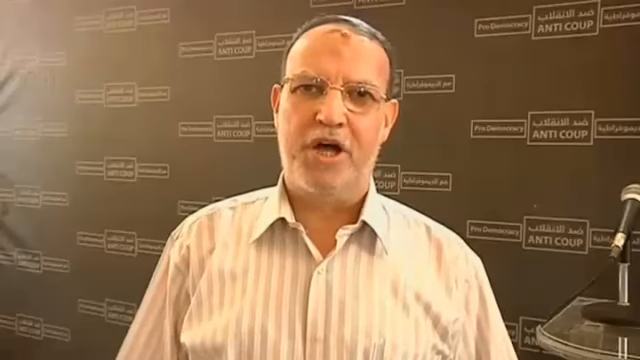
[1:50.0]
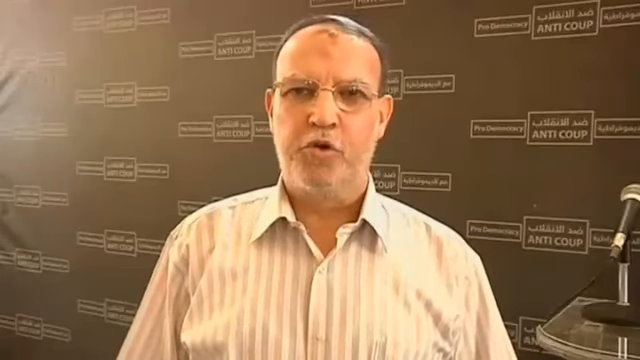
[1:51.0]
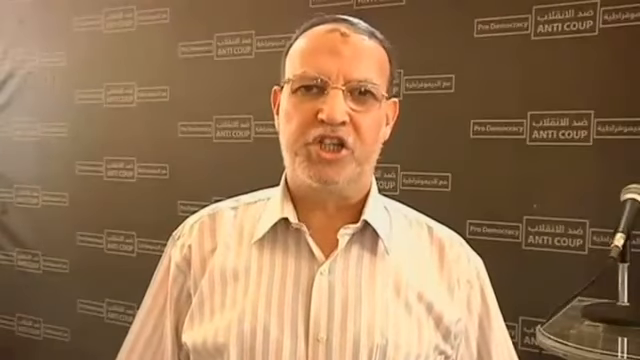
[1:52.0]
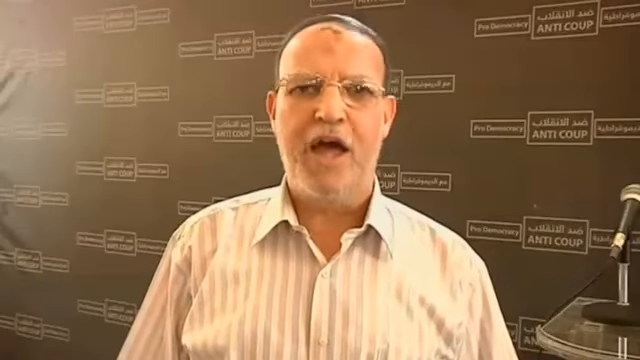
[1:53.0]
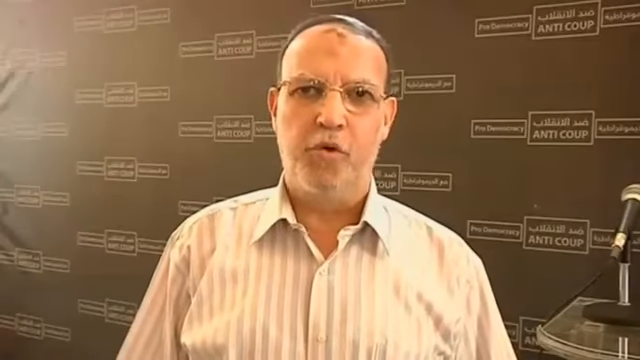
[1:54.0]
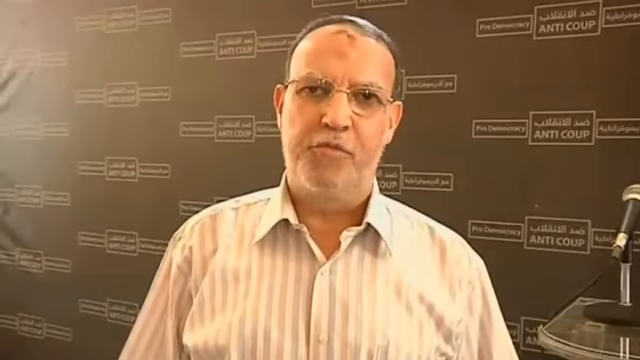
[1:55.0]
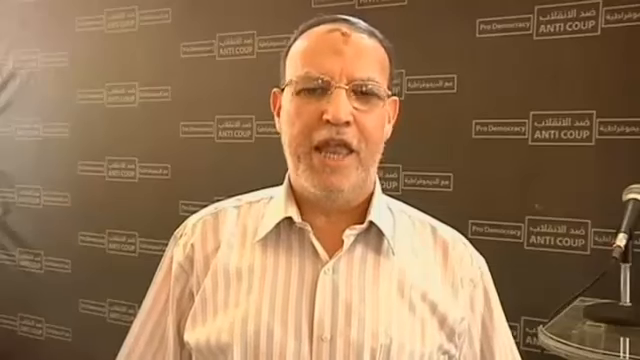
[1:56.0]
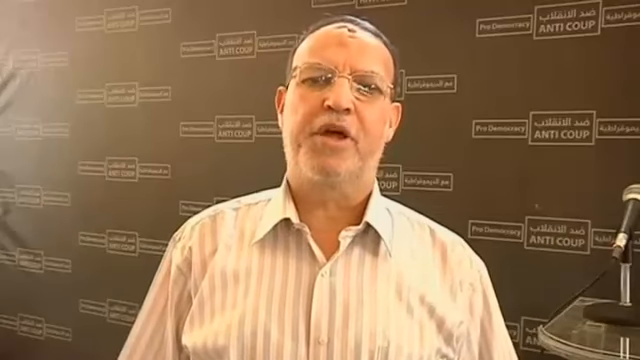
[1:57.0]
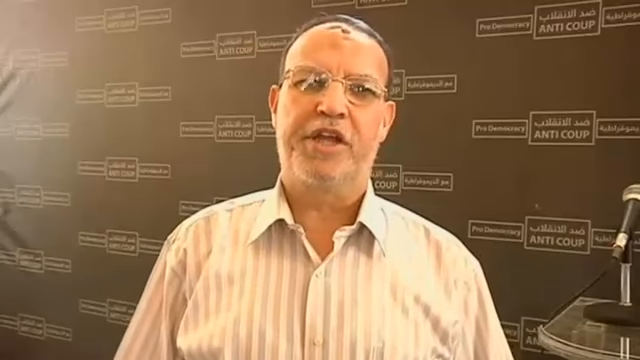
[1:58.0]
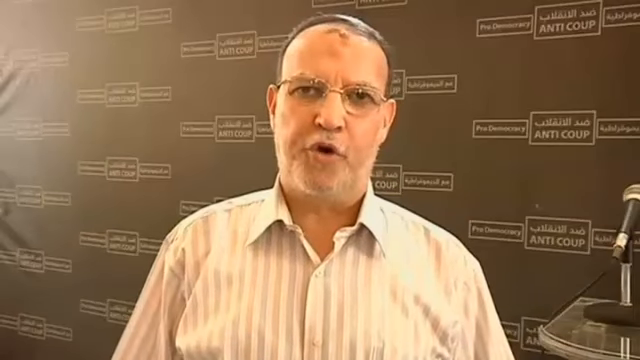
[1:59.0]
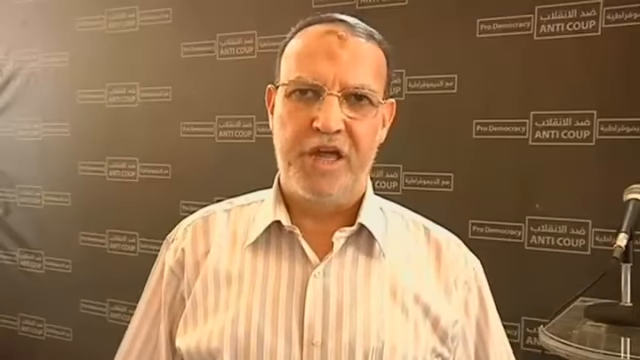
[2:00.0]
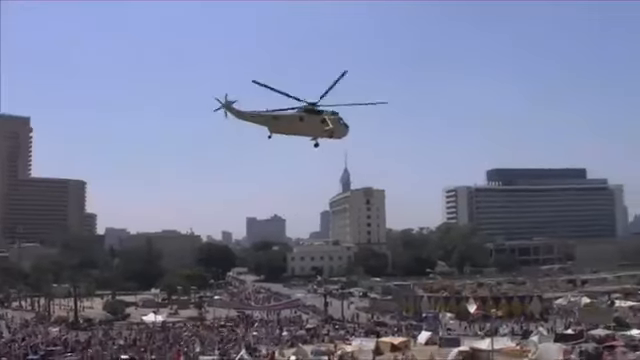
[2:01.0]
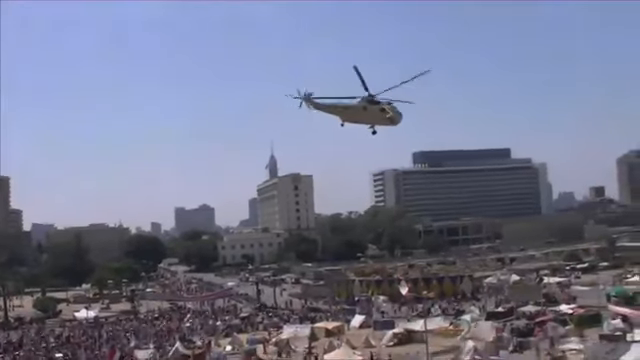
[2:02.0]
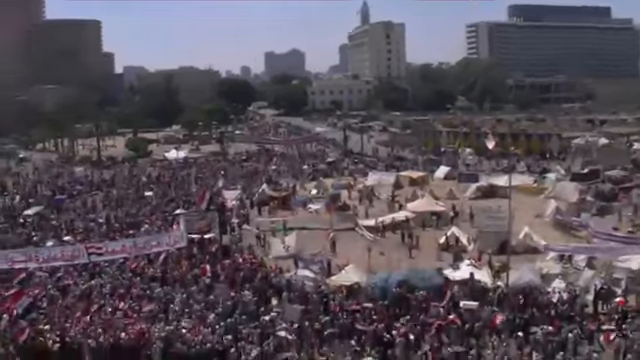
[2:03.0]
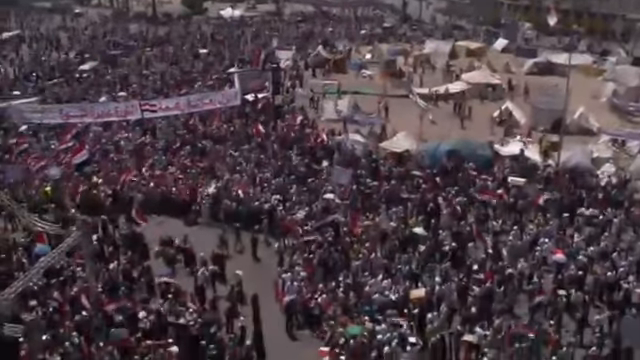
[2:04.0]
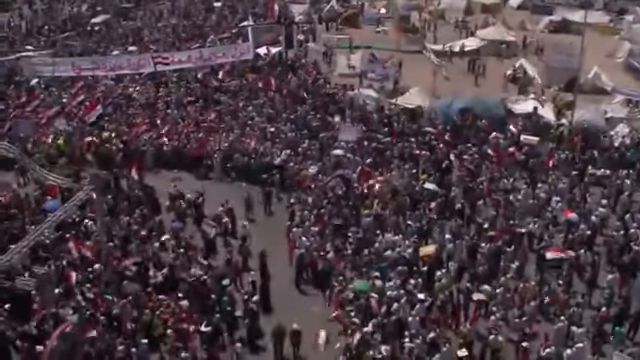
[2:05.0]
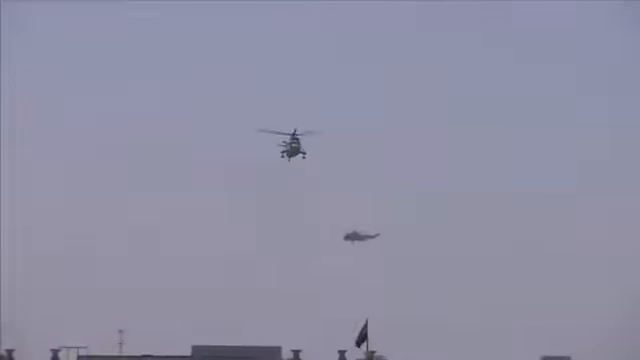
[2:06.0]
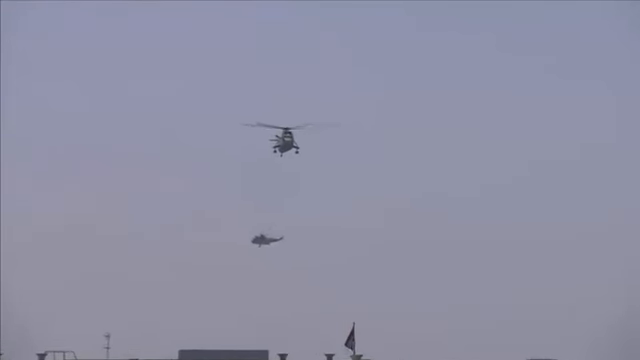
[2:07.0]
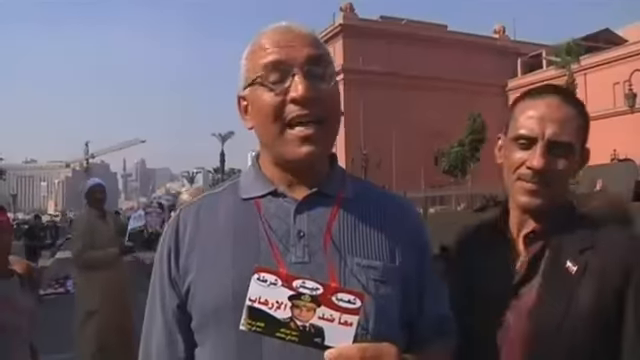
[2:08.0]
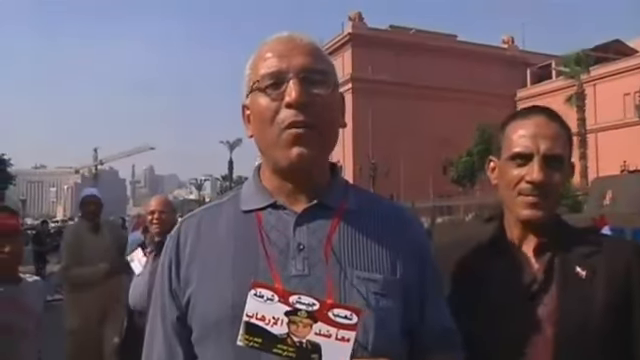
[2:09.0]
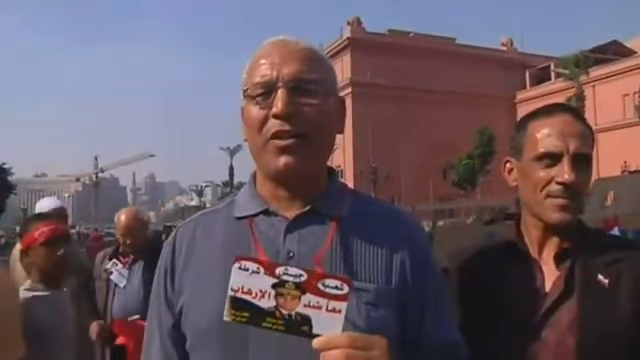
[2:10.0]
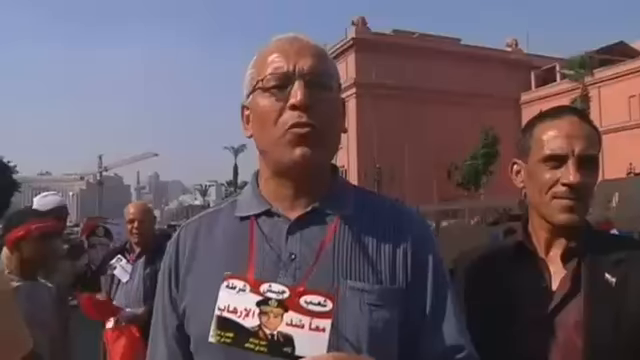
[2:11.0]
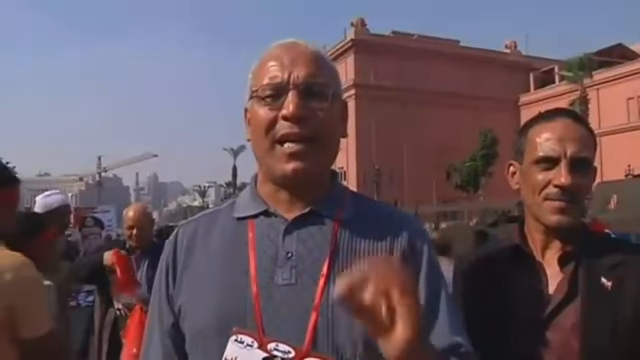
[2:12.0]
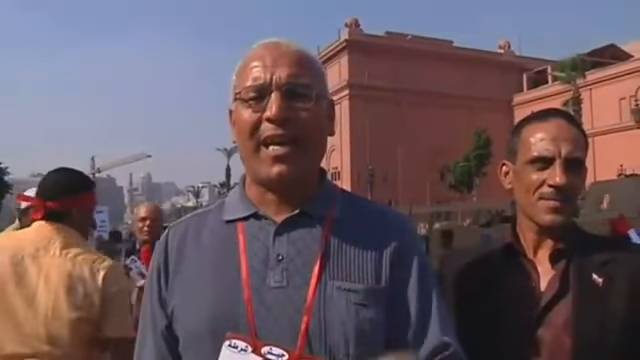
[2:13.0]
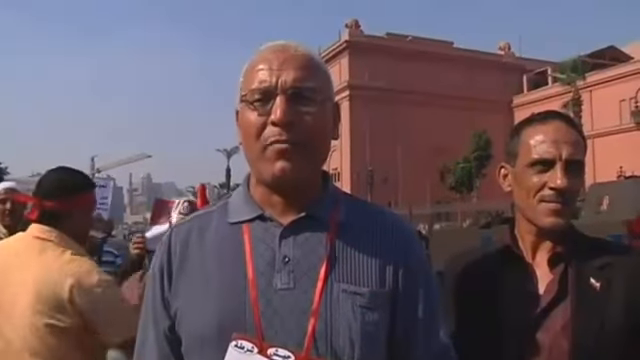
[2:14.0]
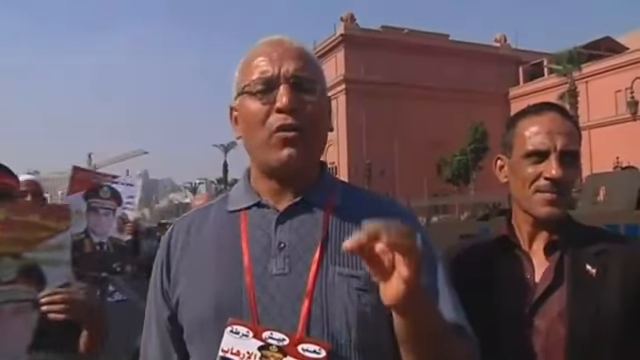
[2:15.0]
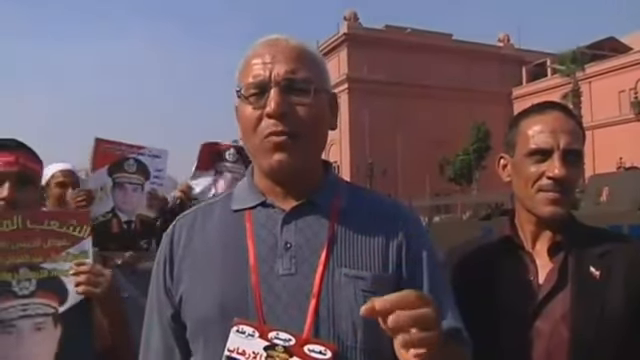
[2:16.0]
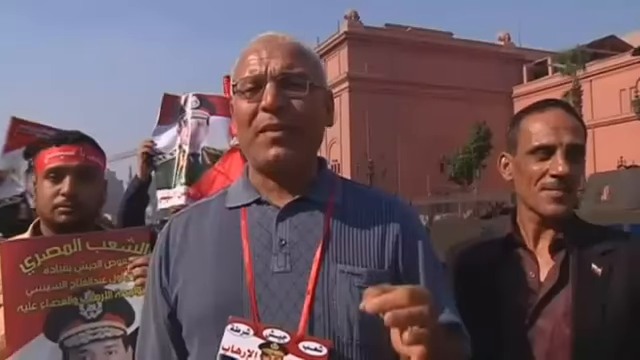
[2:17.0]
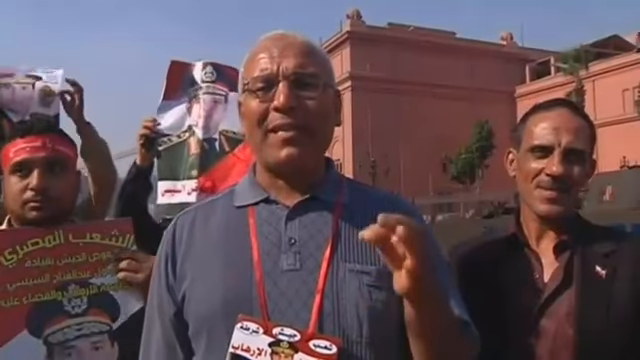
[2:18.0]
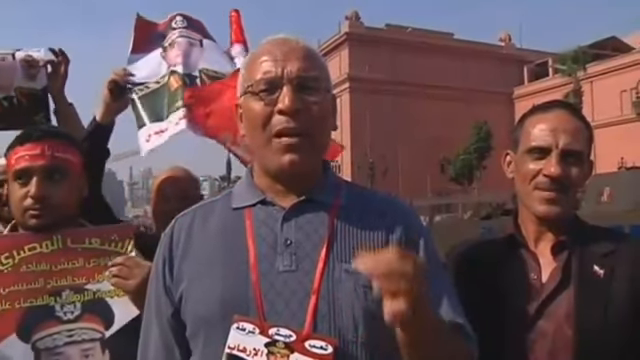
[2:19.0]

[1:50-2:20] A reporter, or a man, is reporting. A helicopter flies over the people, and two helicopters are visible on screen while others in the crowd are still celebrating. A man is being interrogated, and a picture of a military officer or security personnel is shown. Young men on the streets throw objects at each other in angry fights.